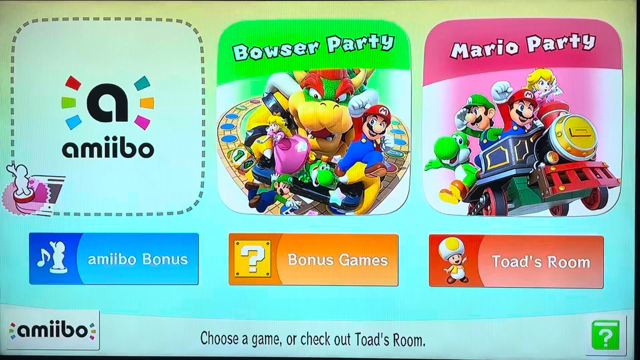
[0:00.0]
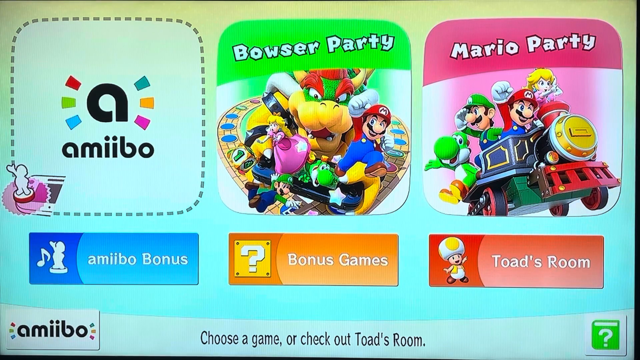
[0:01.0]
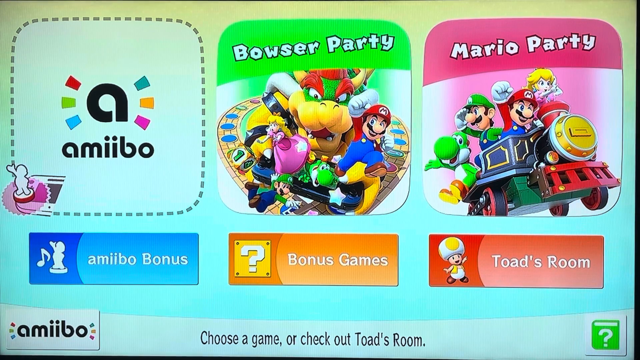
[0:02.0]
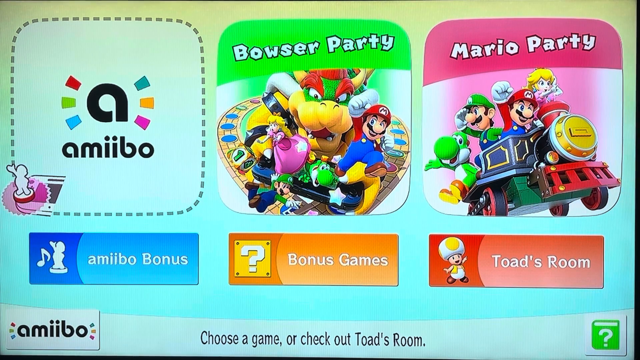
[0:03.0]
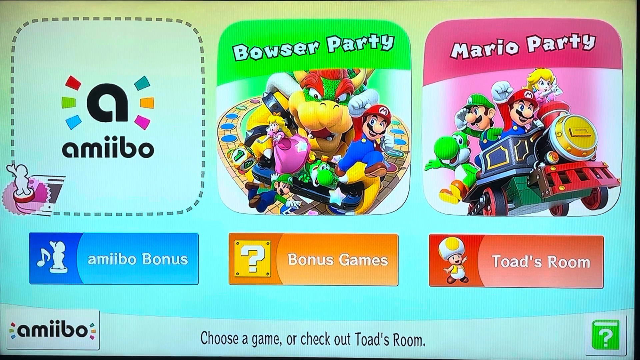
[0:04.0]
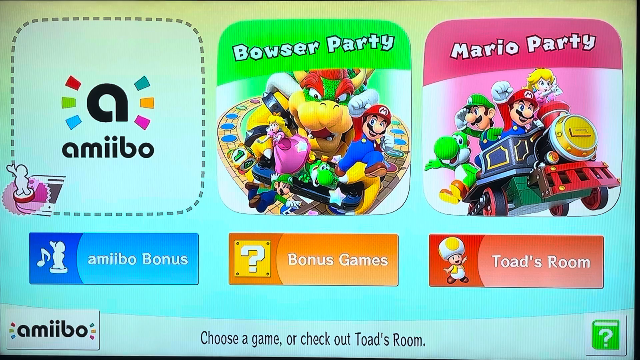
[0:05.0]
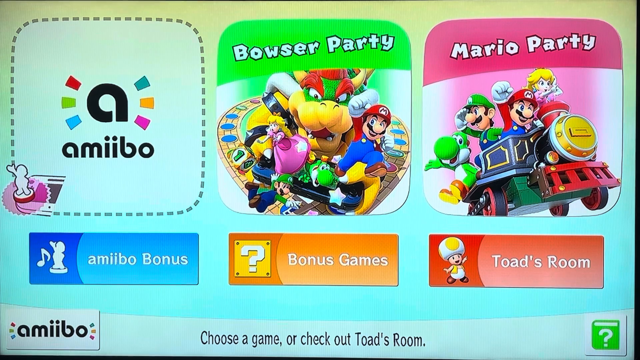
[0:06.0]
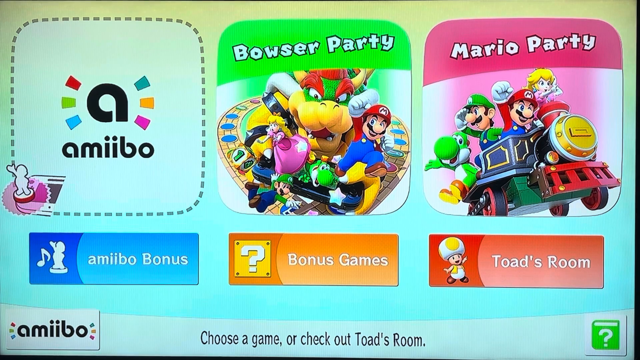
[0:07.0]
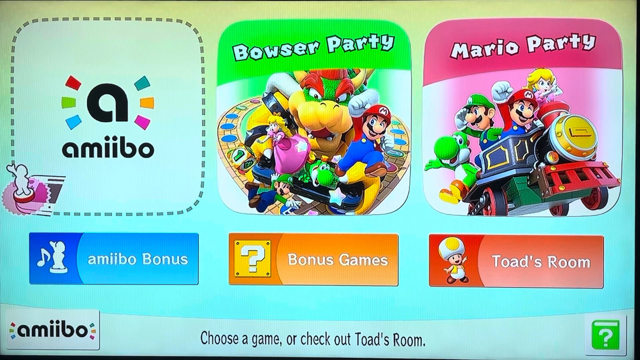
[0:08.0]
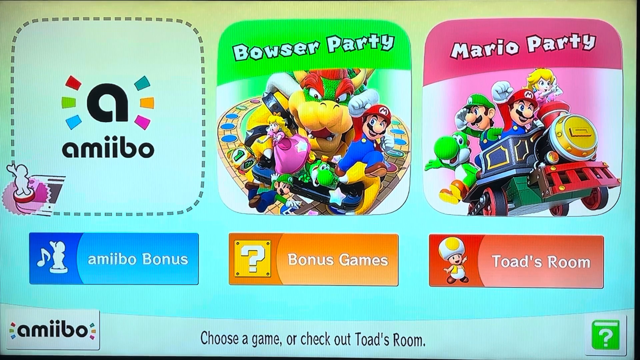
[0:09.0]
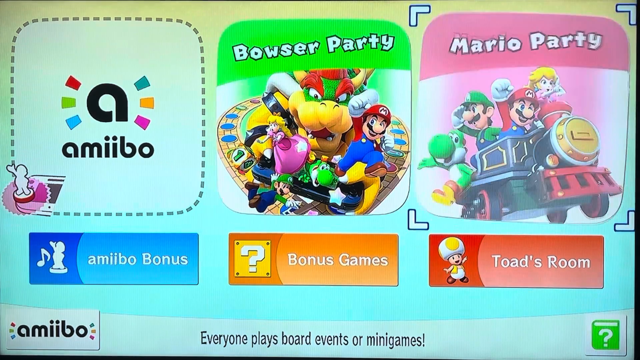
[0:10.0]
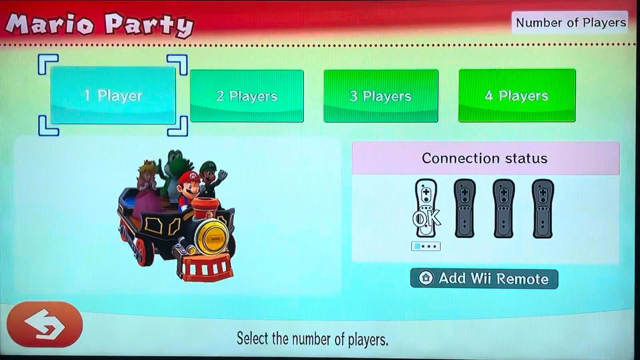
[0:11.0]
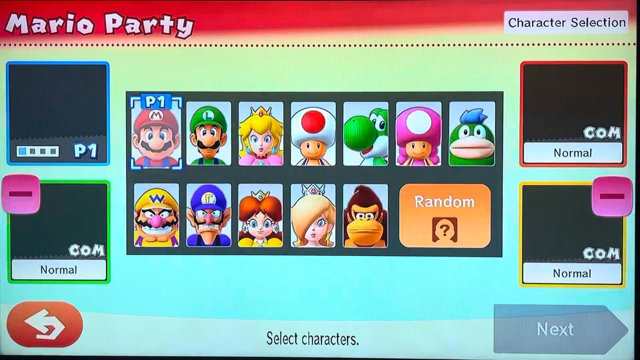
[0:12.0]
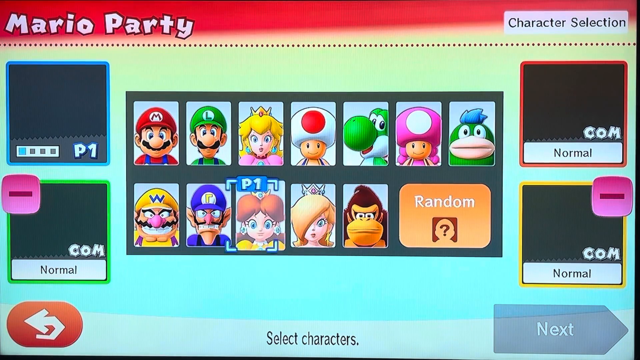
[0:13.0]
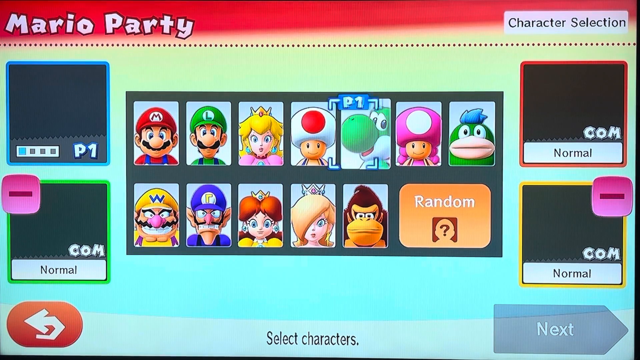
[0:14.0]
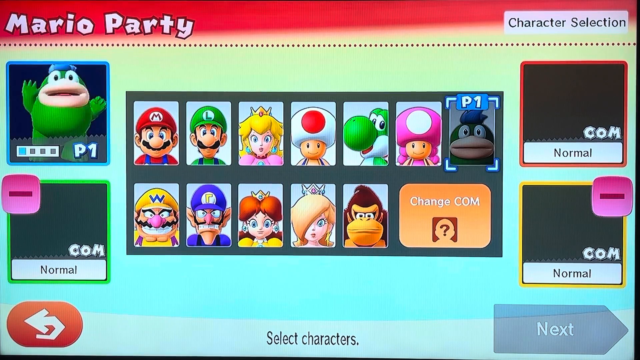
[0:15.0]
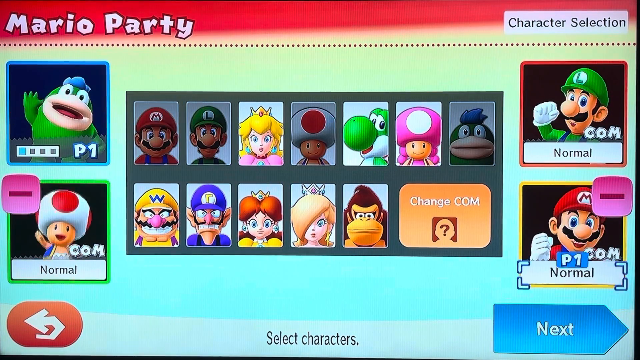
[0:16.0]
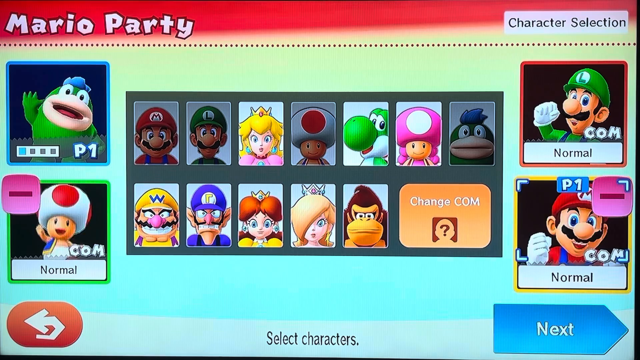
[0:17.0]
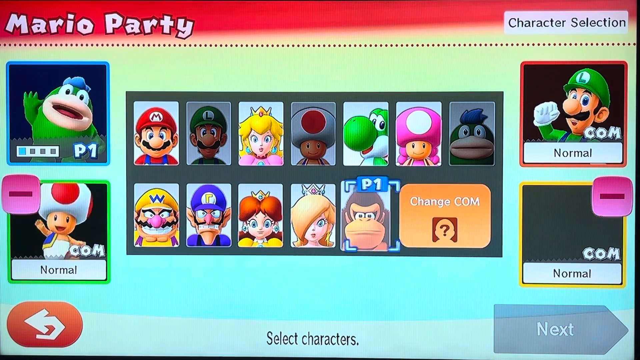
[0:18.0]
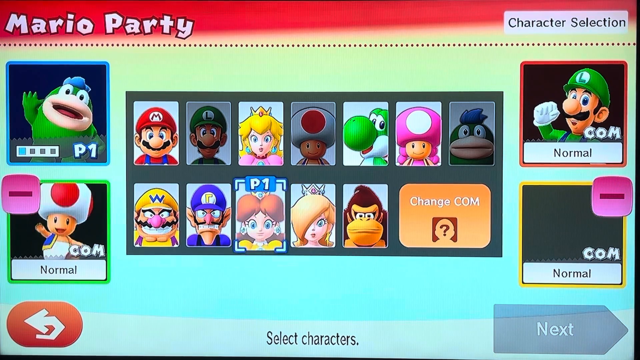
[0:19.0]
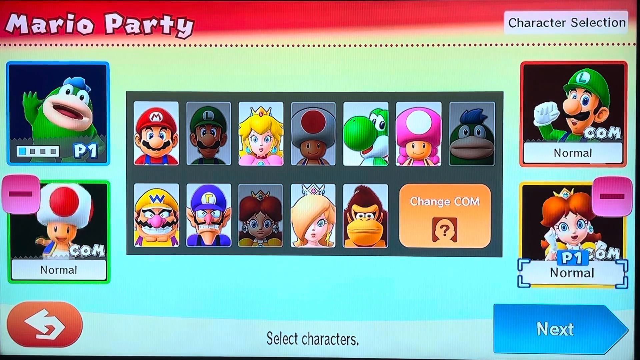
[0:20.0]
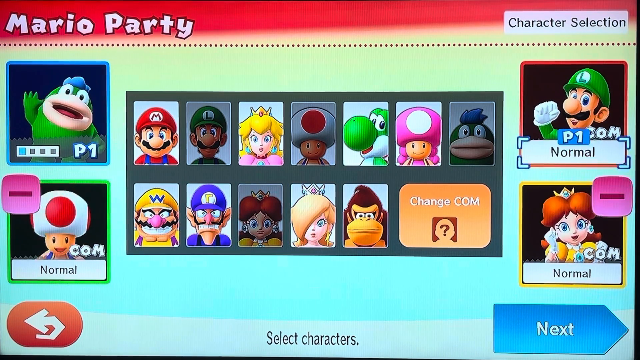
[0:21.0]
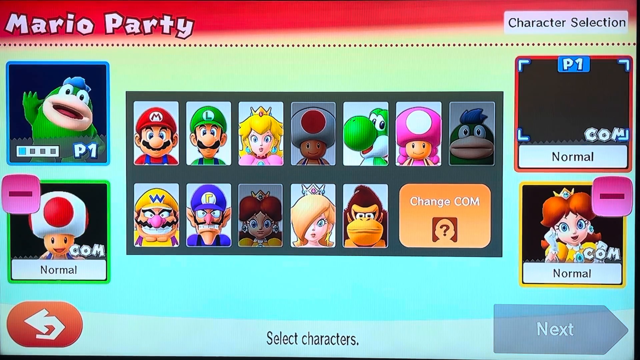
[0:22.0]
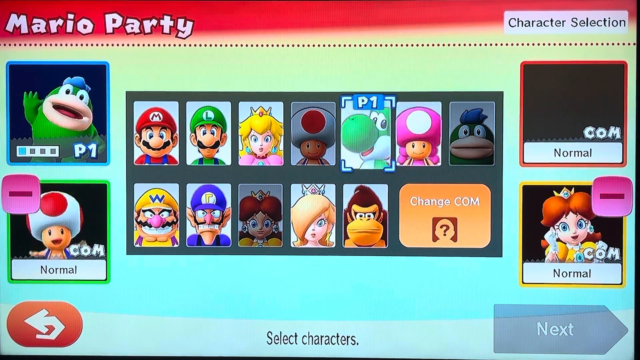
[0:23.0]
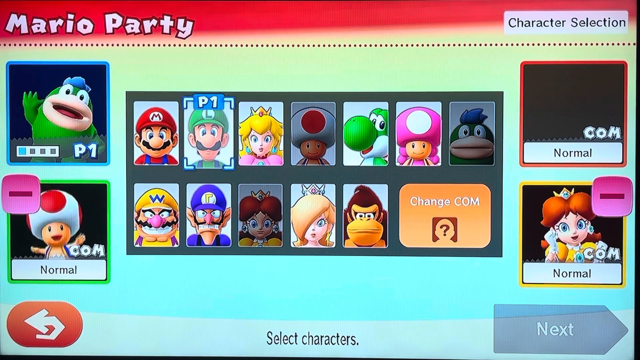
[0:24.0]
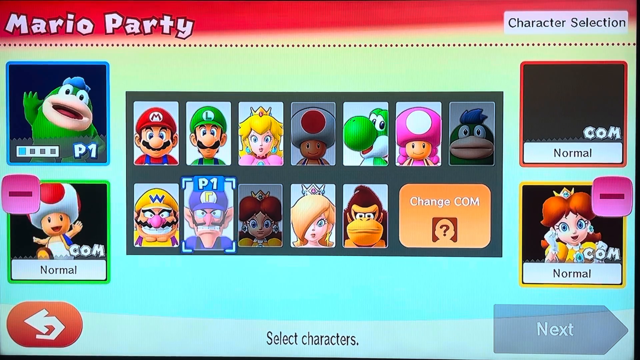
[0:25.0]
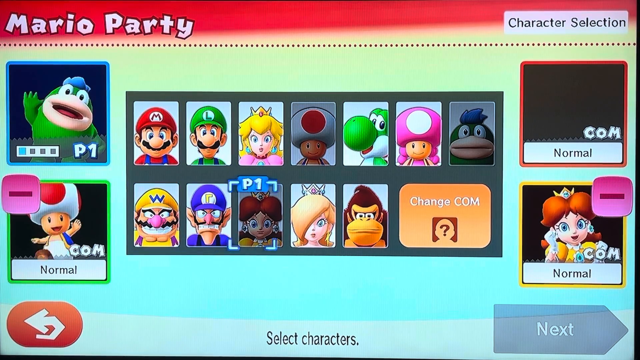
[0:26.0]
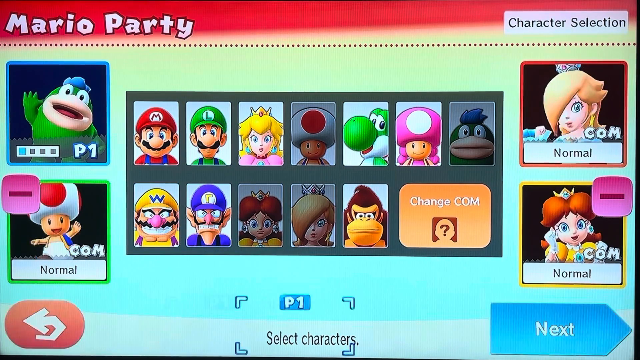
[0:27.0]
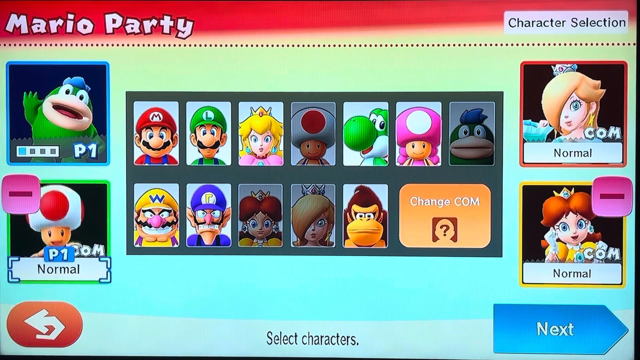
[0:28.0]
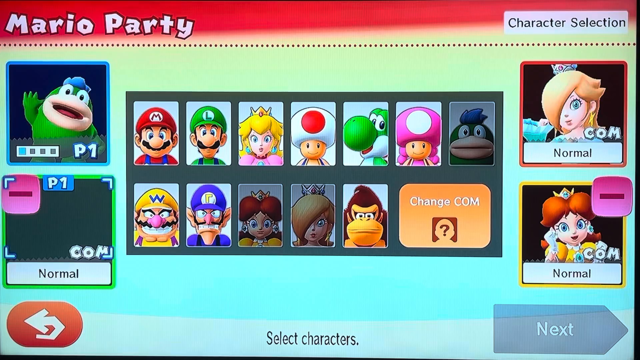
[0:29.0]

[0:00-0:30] The game is Mario Party, or possibly a combo, since Bowser Party is listed as well, and it looks like it is on the Wii. Player one is setting up the game and picking characters. The available characters include Mario, Luigi, Peach, Yoshi, Bowser, Toadette, Wario, Daisy, another princess, DK, and baby DK.